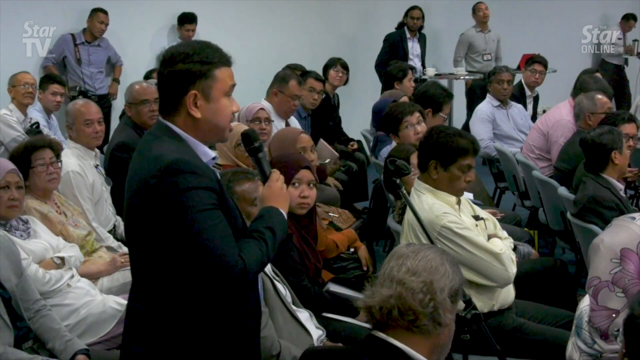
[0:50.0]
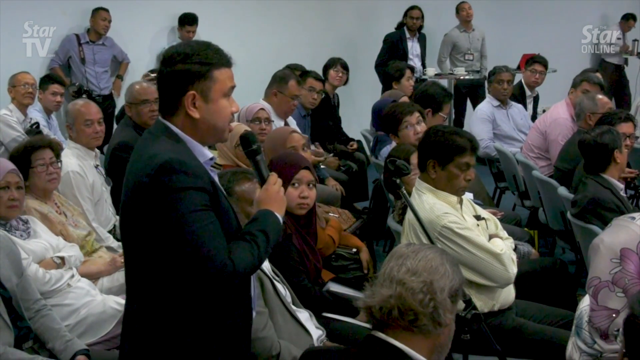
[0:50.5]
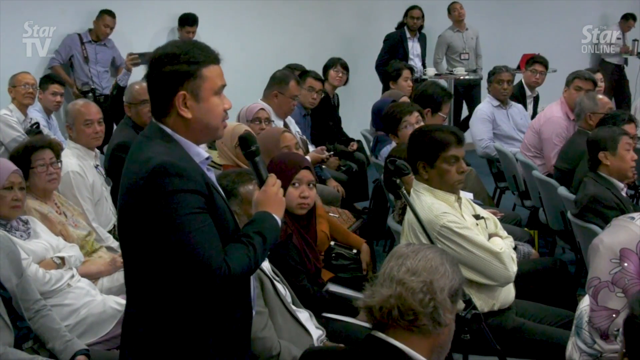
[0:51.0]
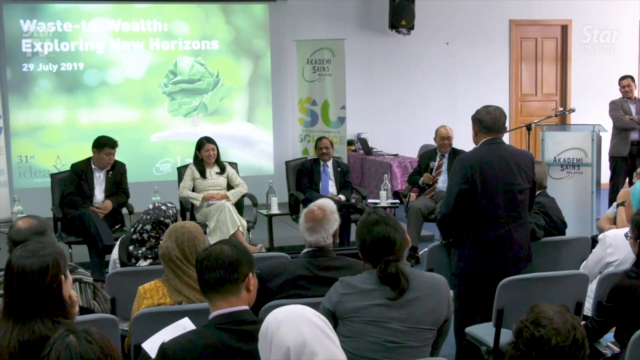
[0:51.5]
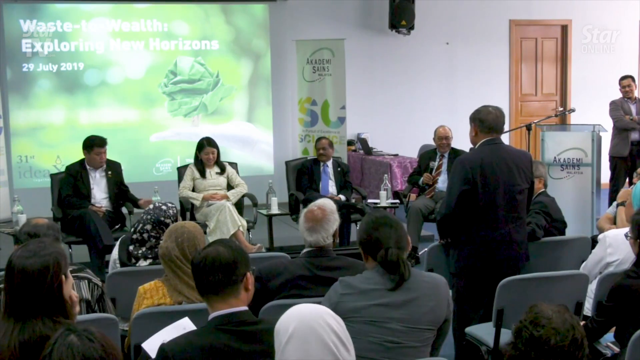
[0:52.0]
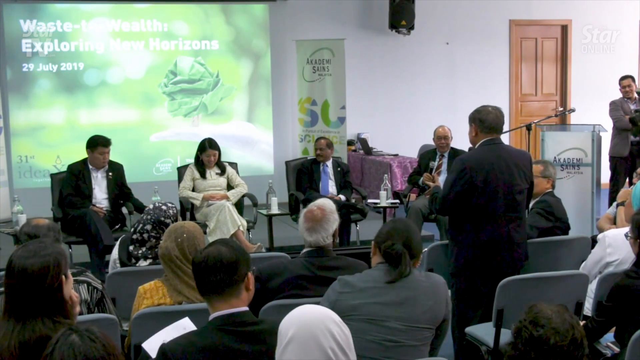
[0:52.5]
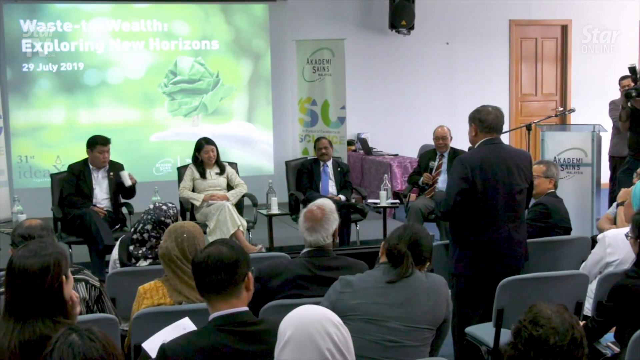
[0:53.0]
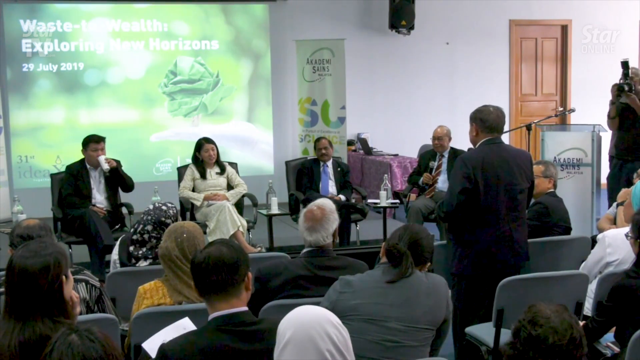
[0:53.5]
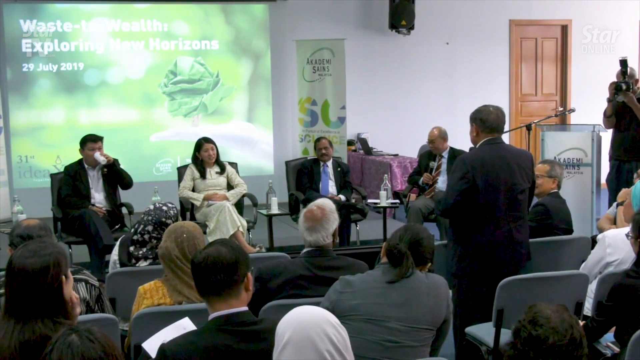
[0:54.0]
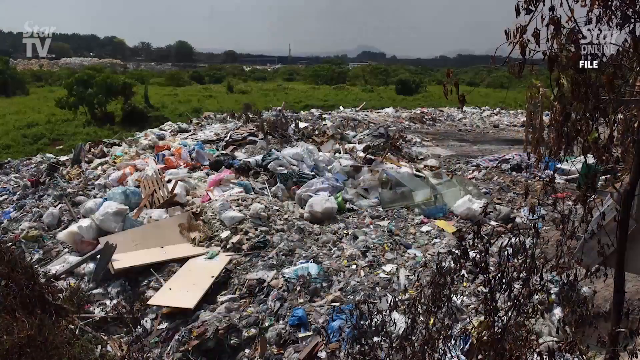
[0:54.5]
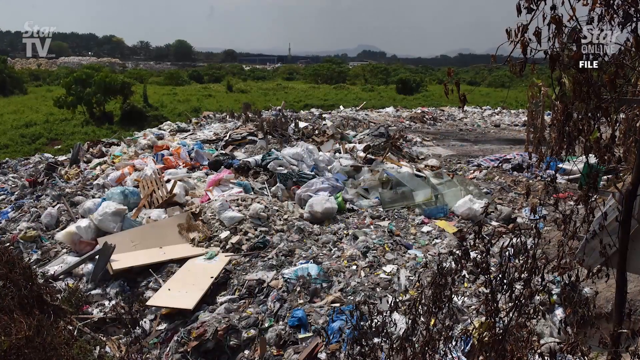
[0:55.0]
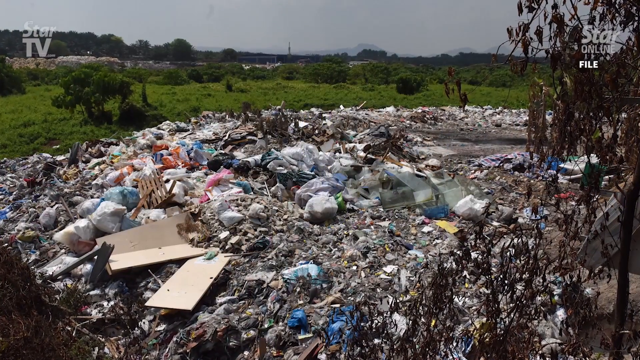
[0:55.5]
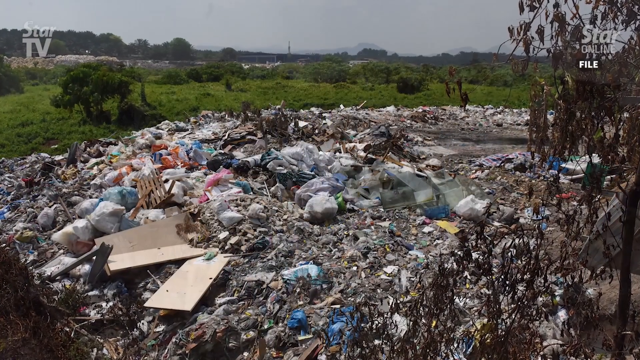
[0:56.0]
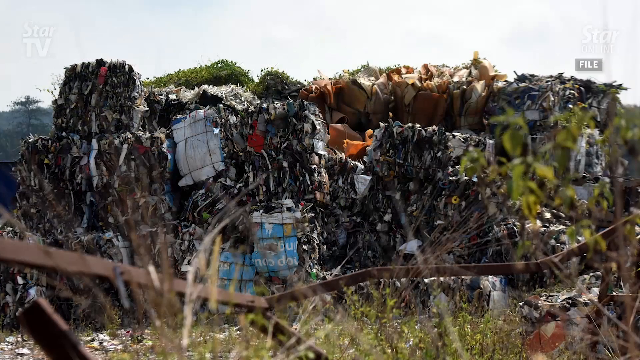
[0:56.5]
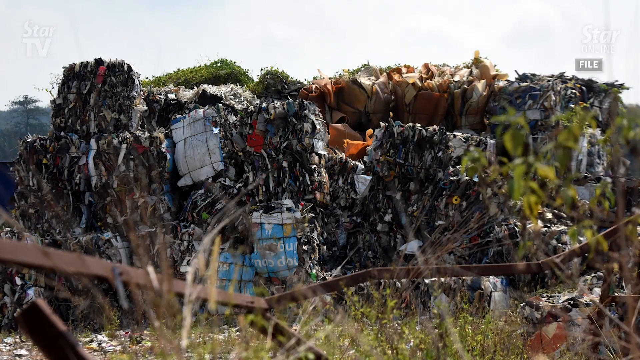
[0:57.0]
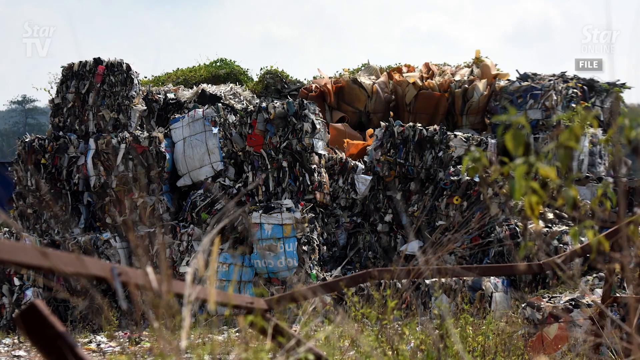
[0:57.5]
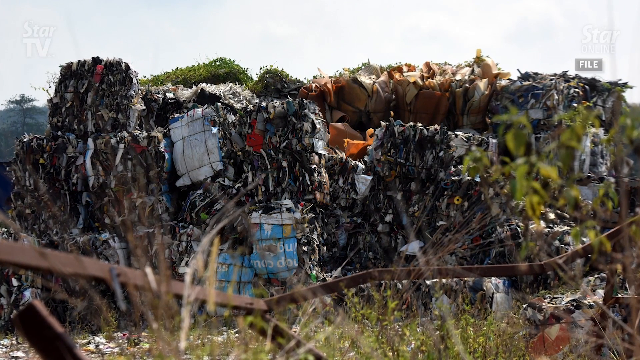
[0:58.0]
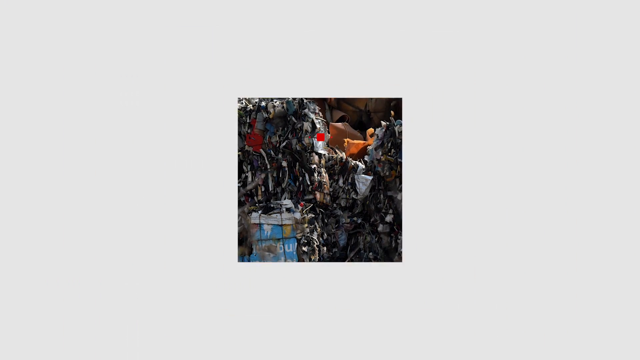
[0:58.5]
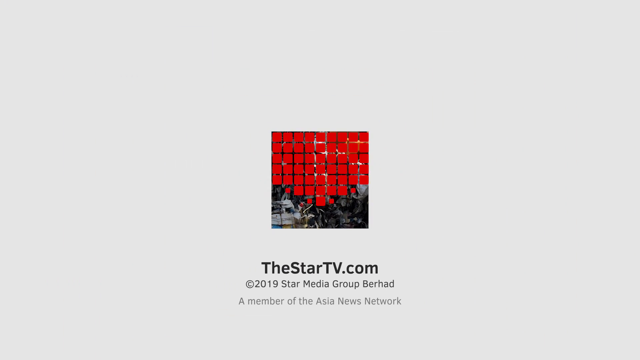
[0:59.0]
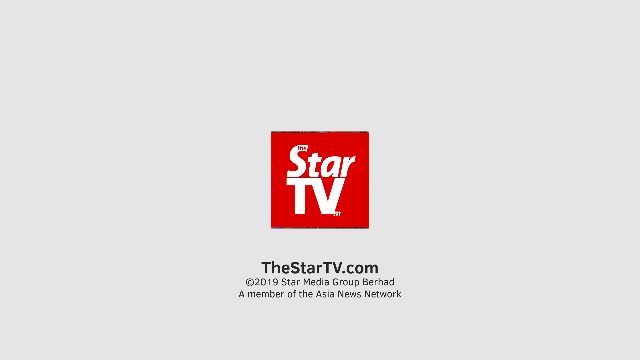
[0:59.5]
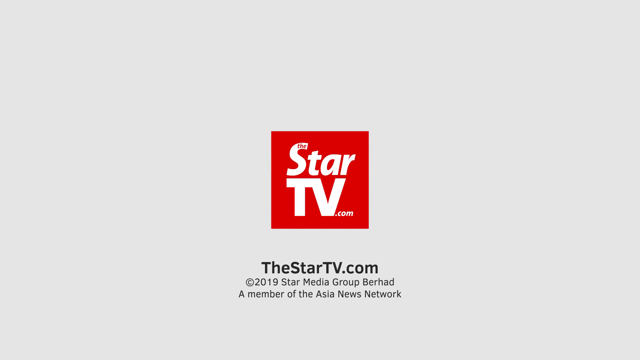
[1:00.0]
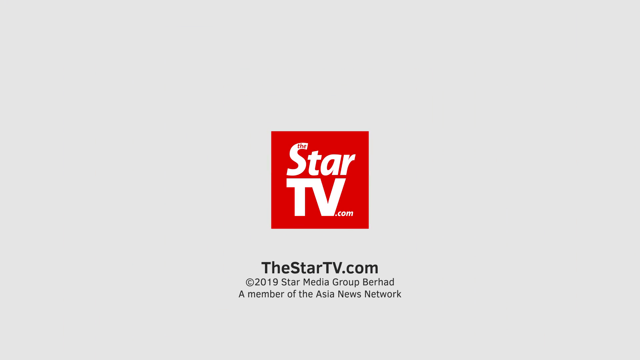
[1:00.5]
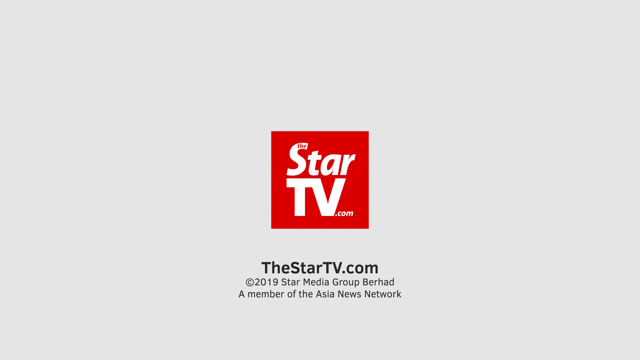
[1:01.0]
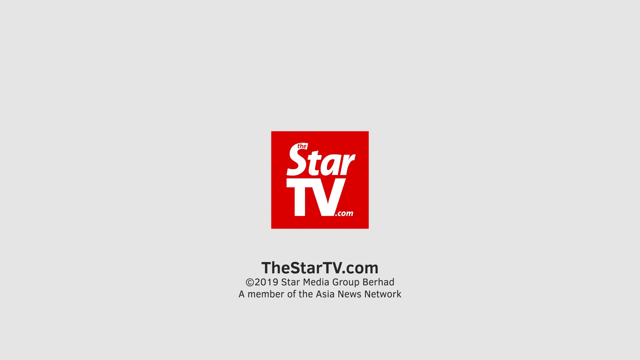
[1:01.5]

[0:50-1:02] The back of the audience member addressing the people on the platform of the waste expo in Malaysia is shown. Then still images appear of a green area with a kind of mountainous range in the distance and a tremendous pile of garbage in the middle of the foreground. The image switches to one, perhaps of a spot nearby, showing bales of what appears to be cardboard and paper trash, though it could be sheet metal; the bales, roughly six to eight hundred pounds each, appear to have been thrown into a field, judging by the undergrowth around them. The screen then goes white, closing into the center and reducing the image to a small square in the middle, which becomes red. The Star TV icon appears with "thestartv.com - a member of the Asia News Network" underneath it.